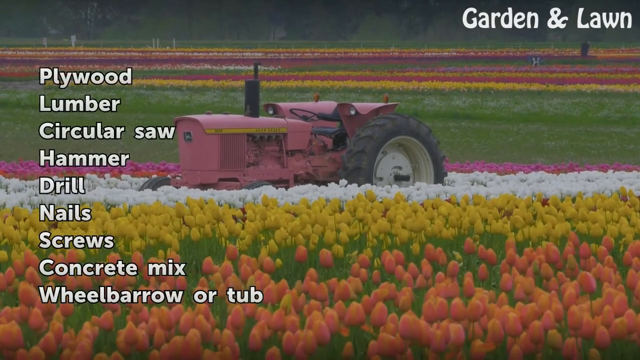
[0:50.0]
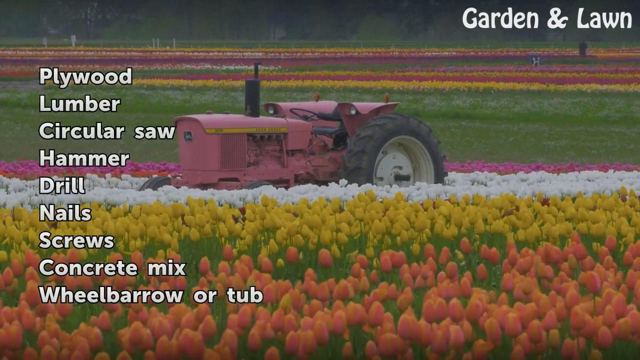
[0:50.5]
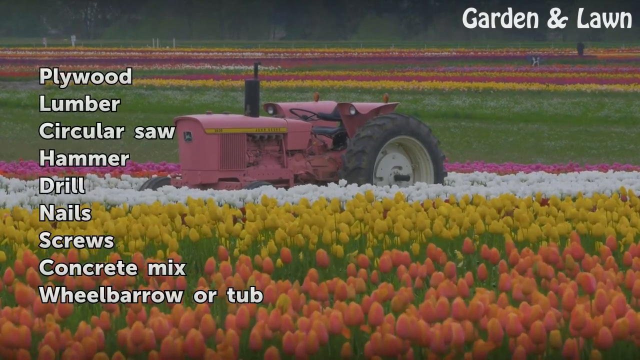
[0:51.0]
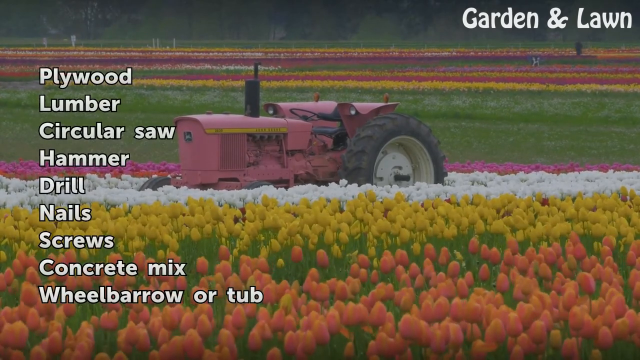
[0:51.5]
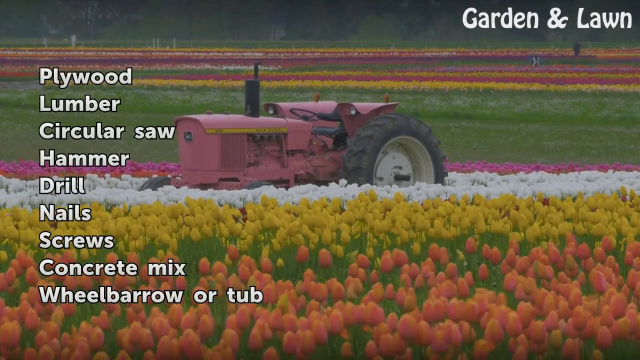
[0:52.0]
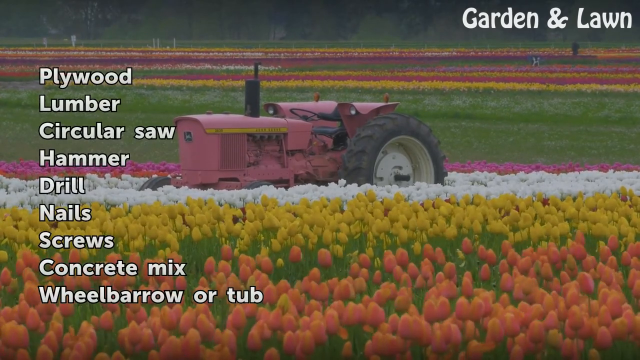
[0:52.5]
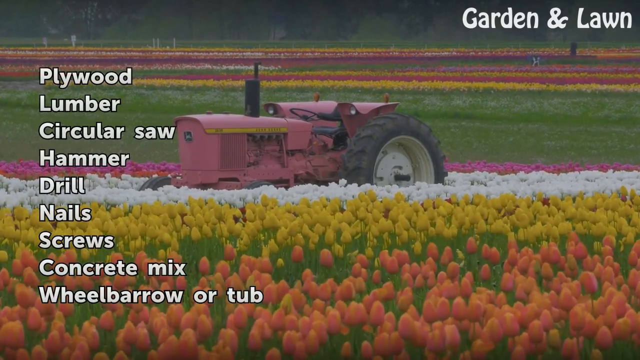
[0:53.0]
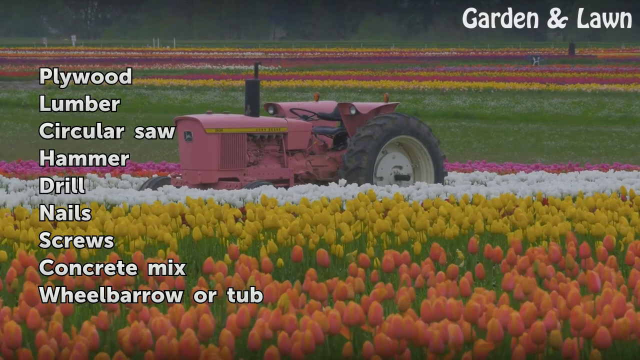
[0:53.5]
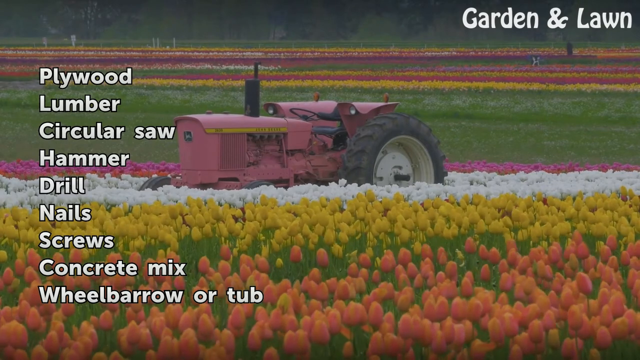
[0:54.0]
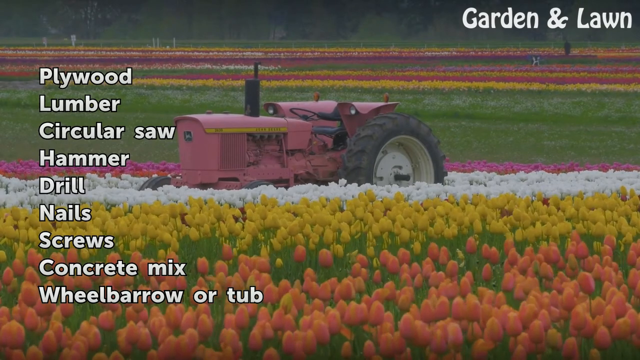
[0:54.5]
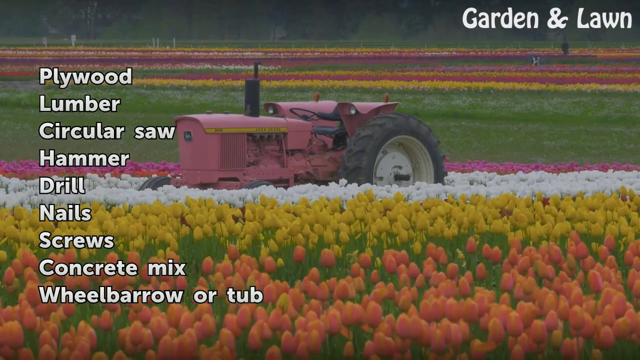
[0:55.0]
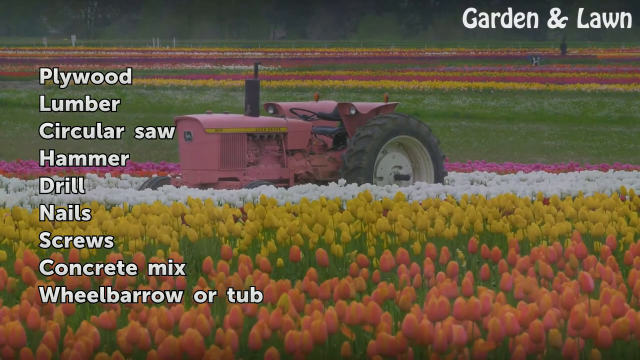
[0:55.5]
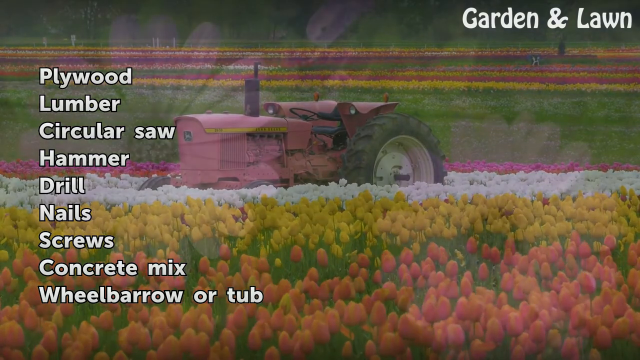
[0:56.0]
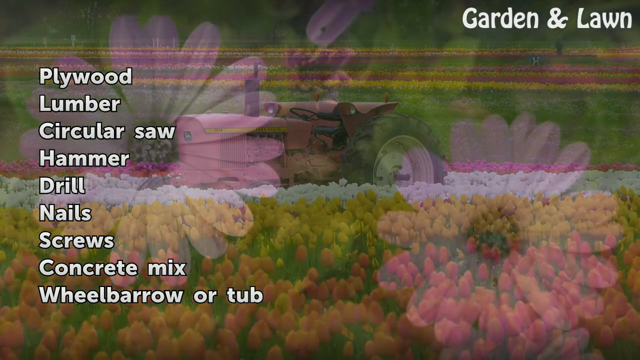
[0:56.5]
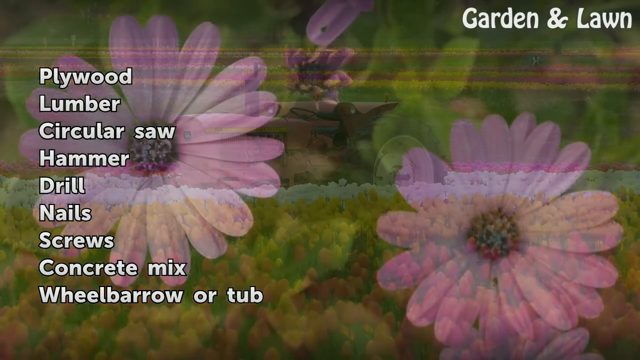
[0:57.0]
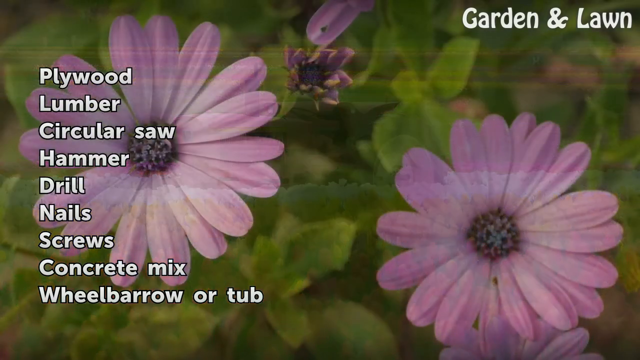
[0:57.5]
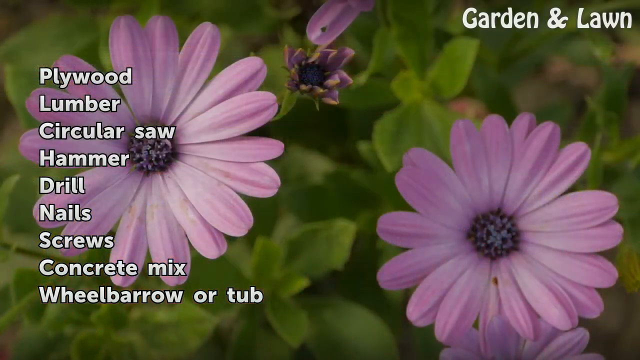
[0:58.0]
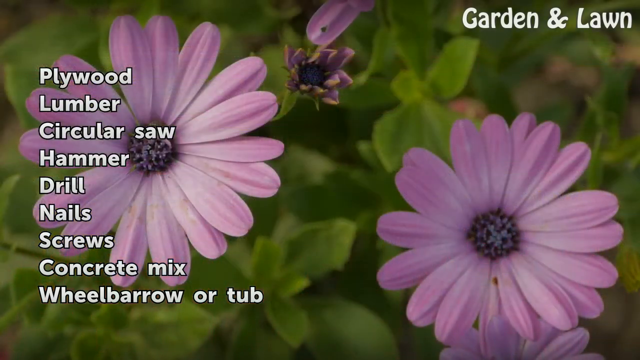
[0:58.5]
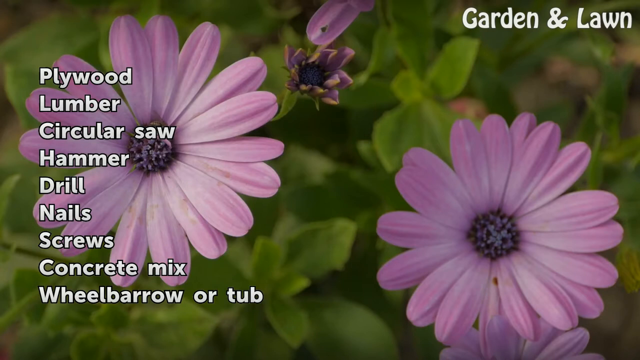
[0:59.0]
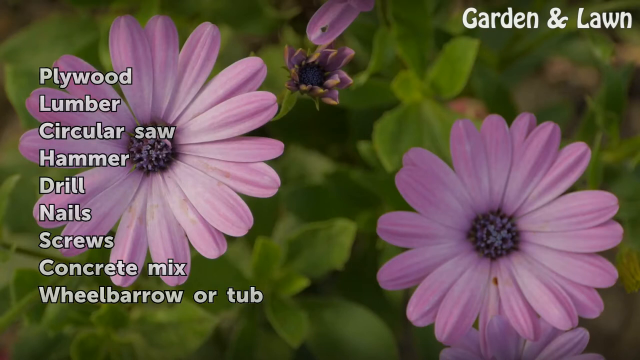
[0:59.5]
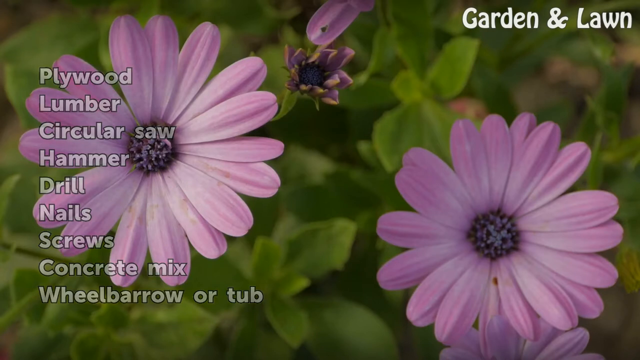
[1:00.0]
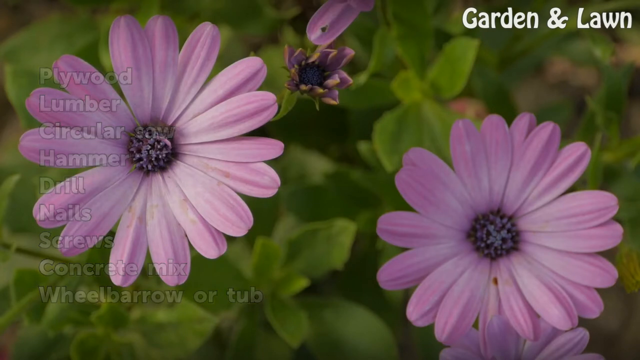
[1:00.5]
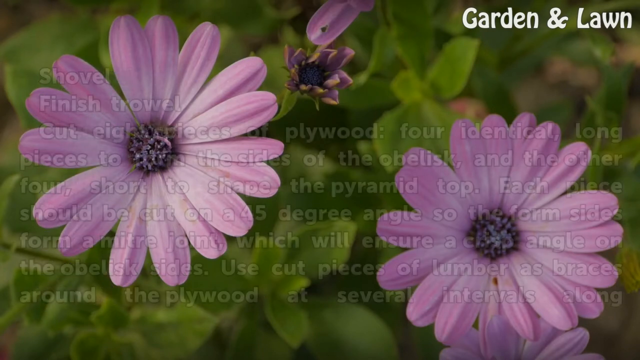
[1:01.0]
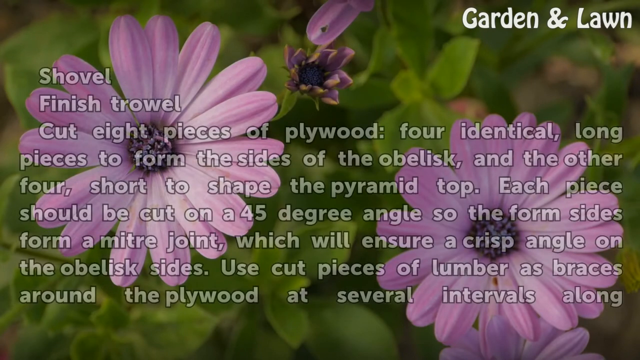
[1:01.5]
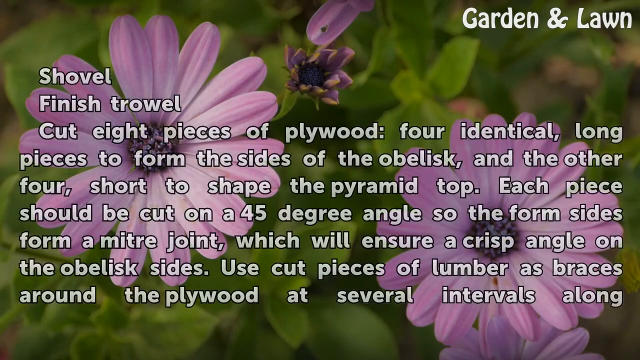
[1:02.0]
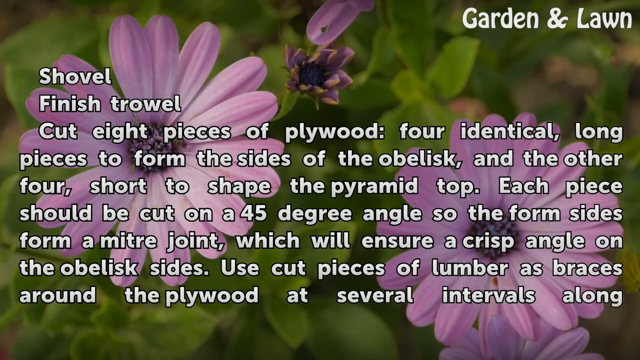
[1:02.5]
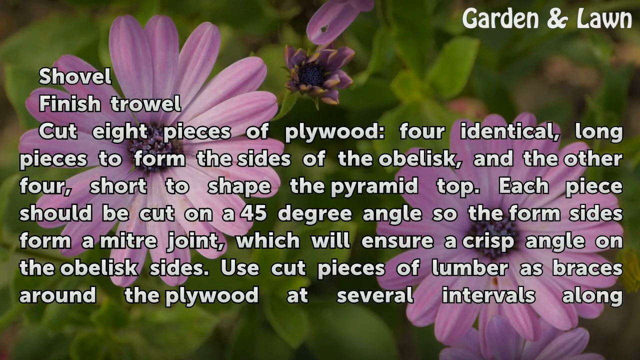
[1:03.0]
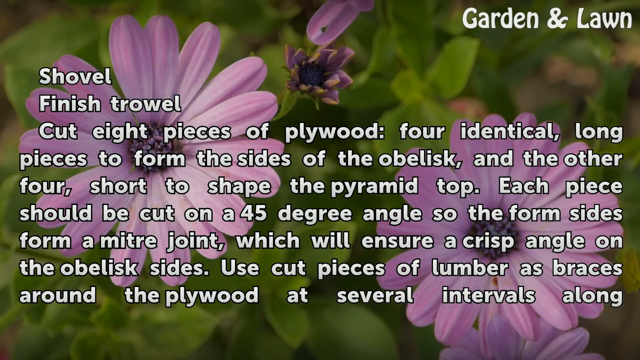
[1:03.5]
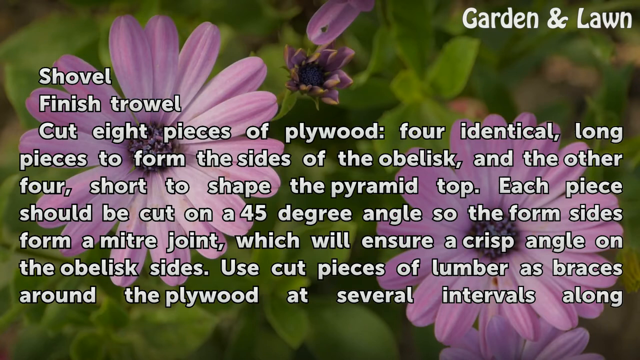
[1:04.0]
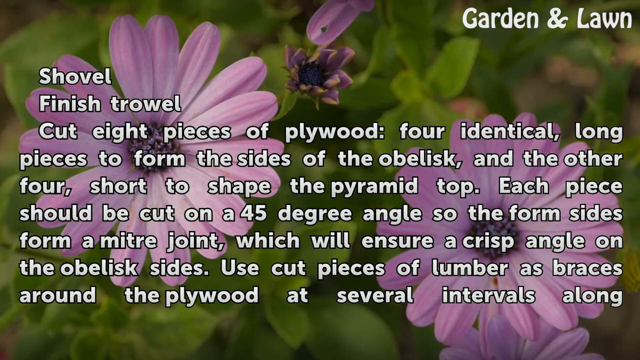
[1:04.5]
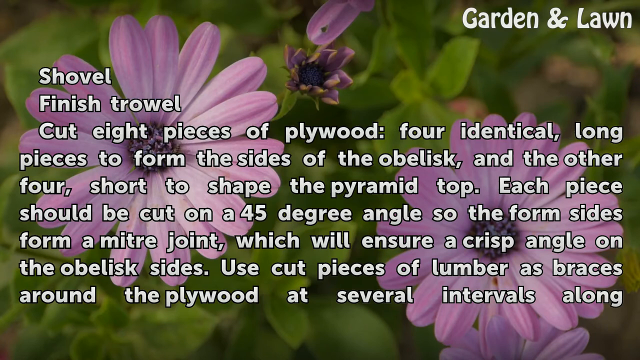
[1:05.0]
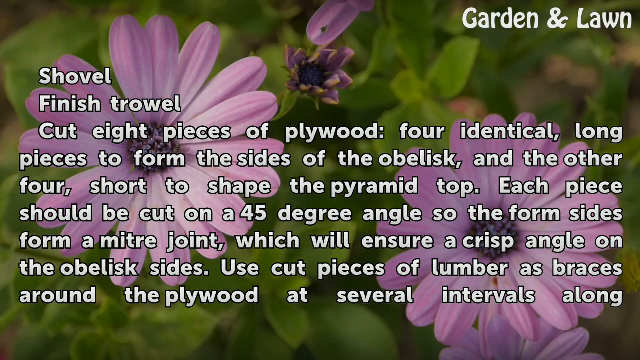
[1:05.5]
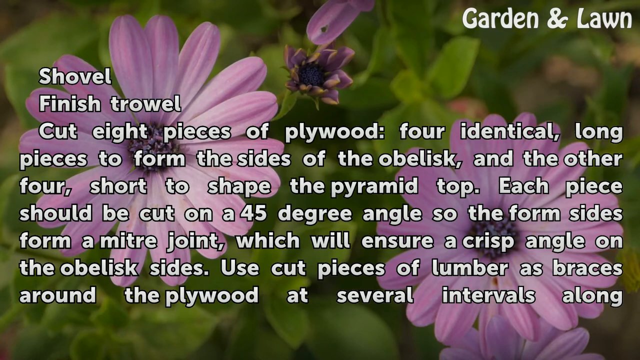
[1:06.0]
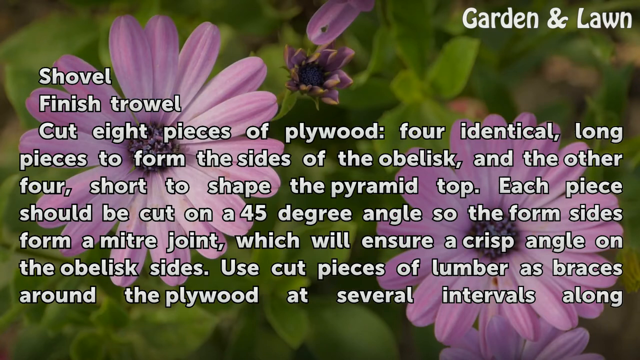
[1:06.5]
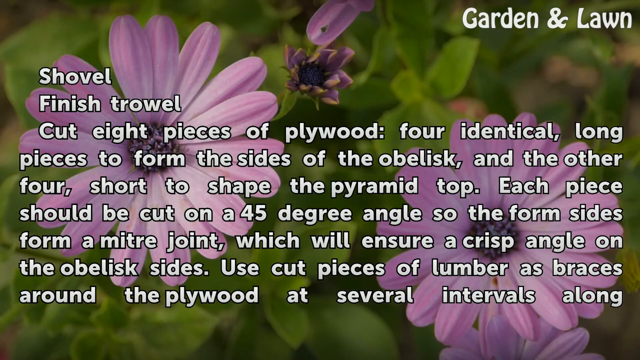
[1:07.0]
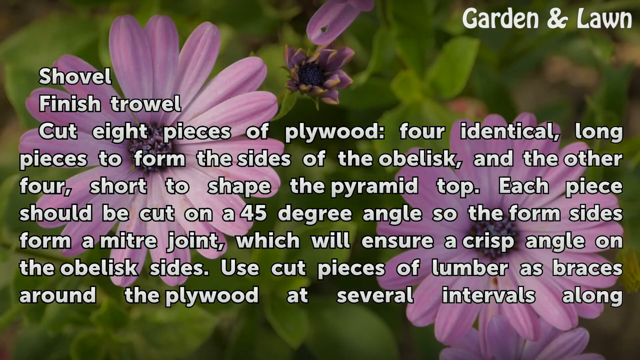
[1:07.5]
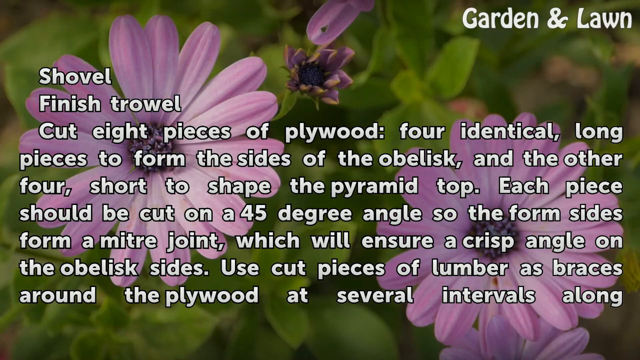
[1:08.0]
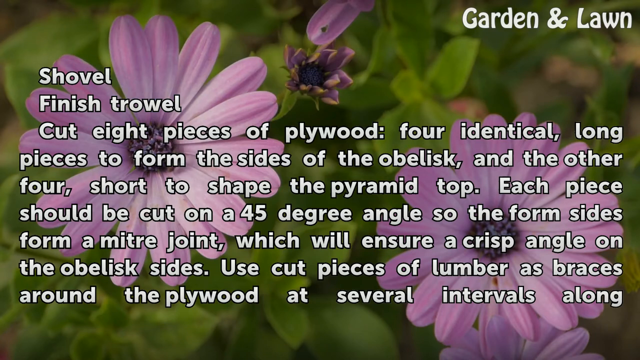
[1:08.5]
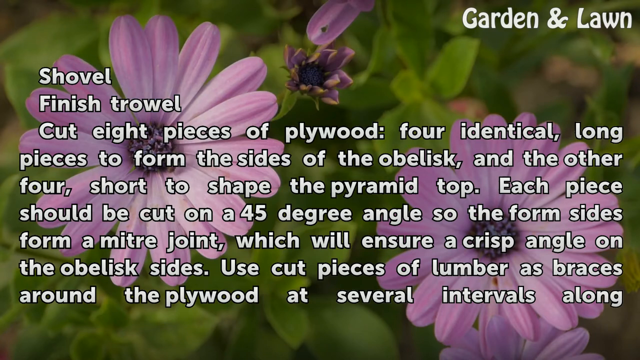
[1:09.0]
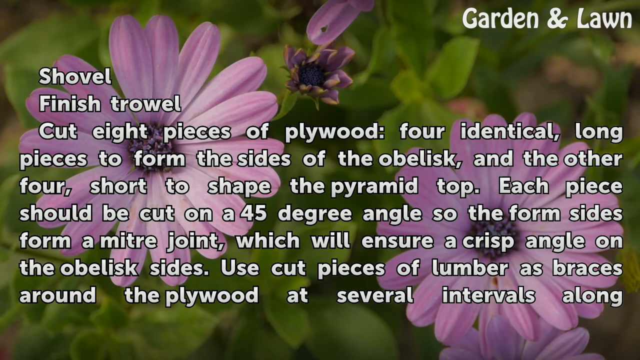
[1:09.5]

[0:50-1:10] The tutorial on obelisk construction continues, with the words "Garden and Lawn" in the upper right corner. The background shows tulips in the wind, ranging from orange to yellow to white, with more rows of colored tulips stretching into the distance to a tree line. On the left of the screen, in white font outlined in black, is a vertical list of materials: "Plywood, lumber, circular saw, hammer, drill, nails, screws, concrete mix, wheelbarrow or tub". The background fades out to an image looking down into the petals of two multi-petaled pink flowers with circular dark centers; below the petals the background is artistically out of focus, showing an area of green foliage down to ground level. Text appears in front of the two pink flowers: "Shovel, finish trowel", followed by instructions: "Cut eight pieces of plywood, four identical long pieces to form the sides of the obelisk, and the other four short to shape the pyramid top. Each piece should be cut on a 45 degree angle so the form sides form a miter joint, which will ensure a crisp angle on the obelisk sides. Use cut pieces of lumber as braces around the plywood at several intervals along". The segment ends abruptly with the word "along" on screen.